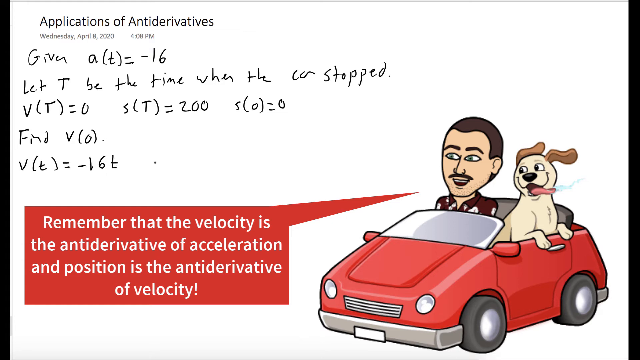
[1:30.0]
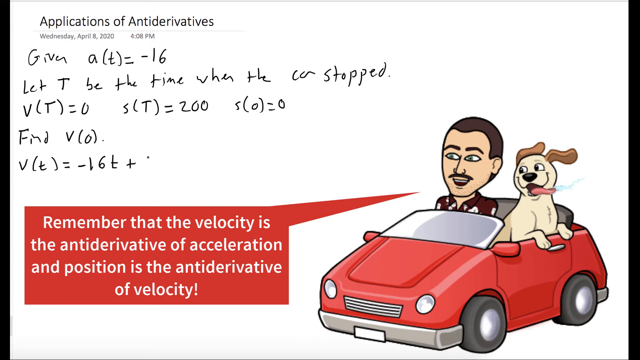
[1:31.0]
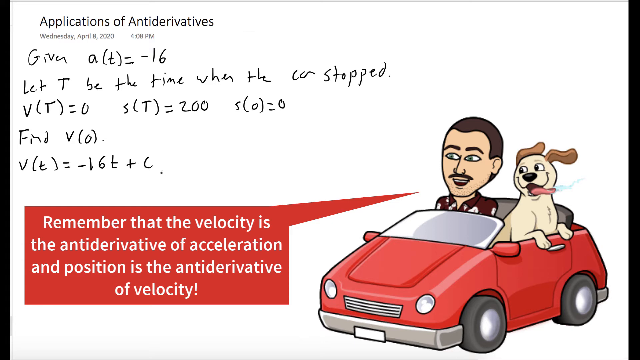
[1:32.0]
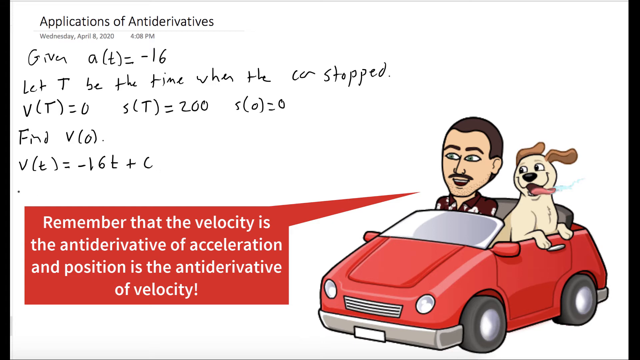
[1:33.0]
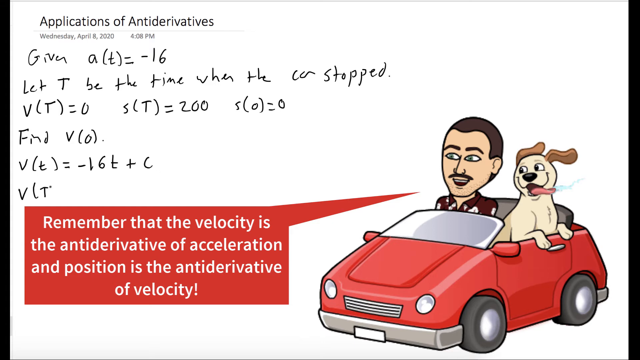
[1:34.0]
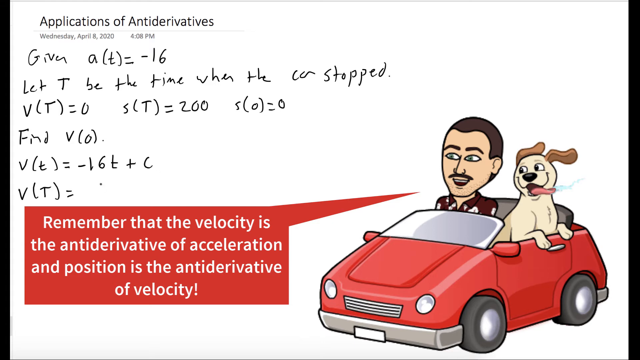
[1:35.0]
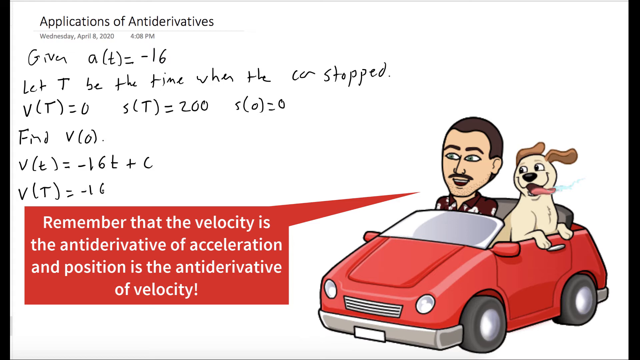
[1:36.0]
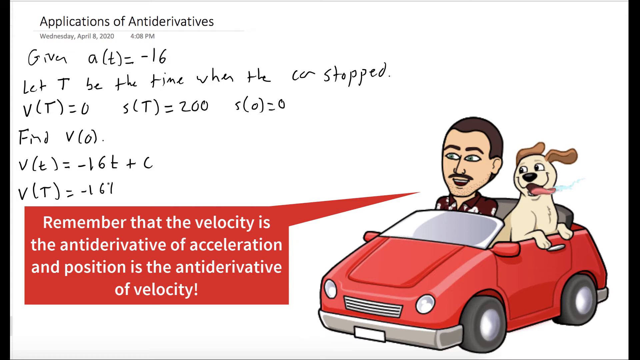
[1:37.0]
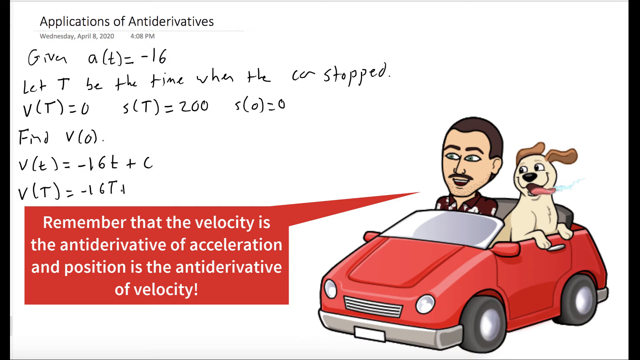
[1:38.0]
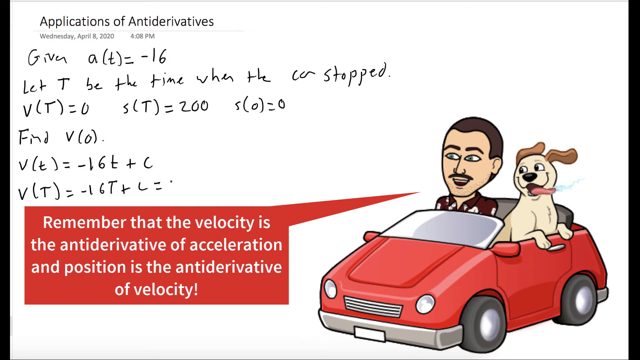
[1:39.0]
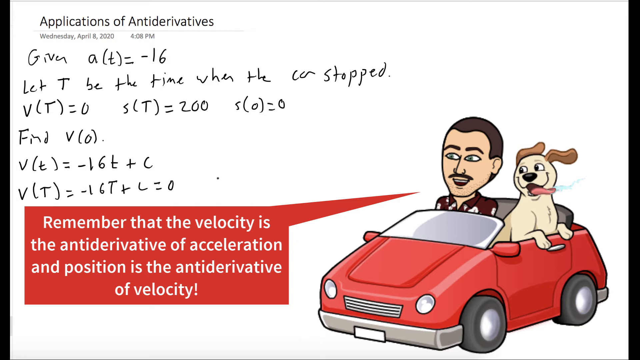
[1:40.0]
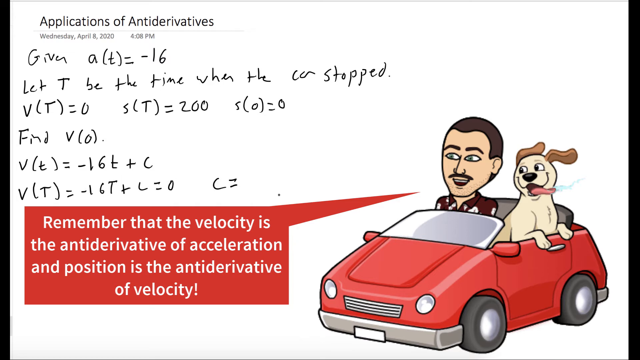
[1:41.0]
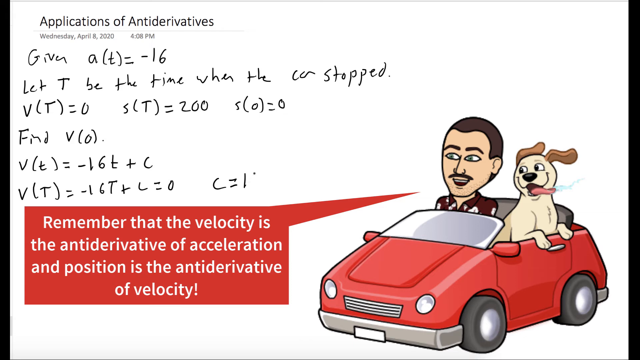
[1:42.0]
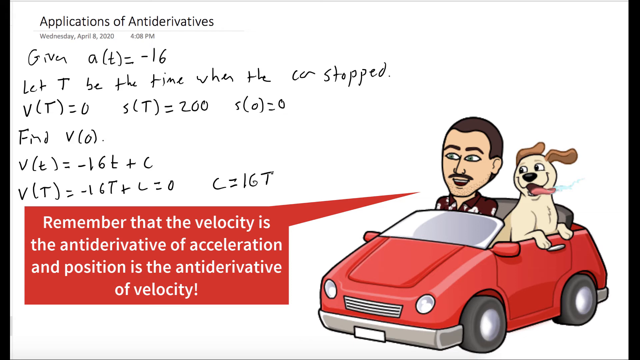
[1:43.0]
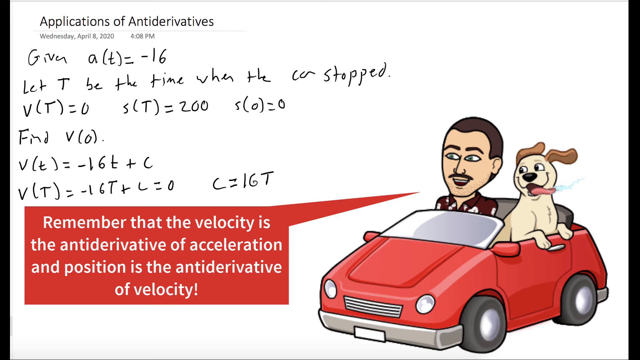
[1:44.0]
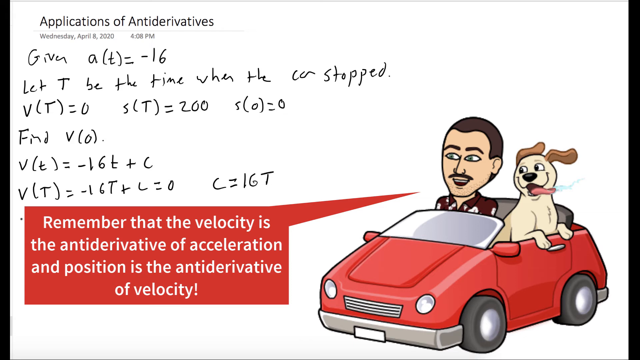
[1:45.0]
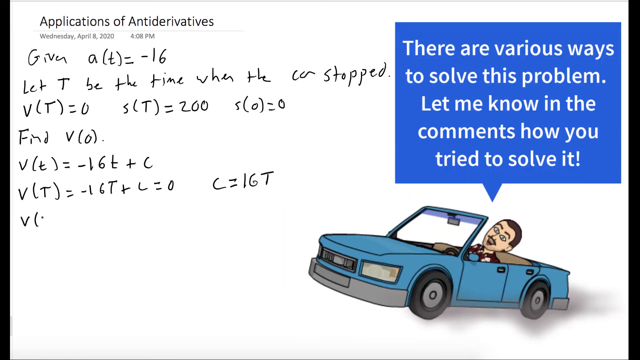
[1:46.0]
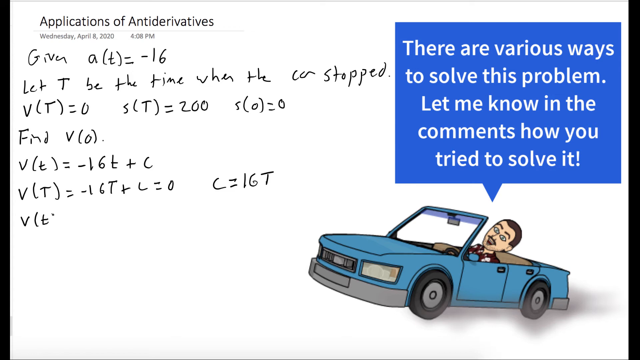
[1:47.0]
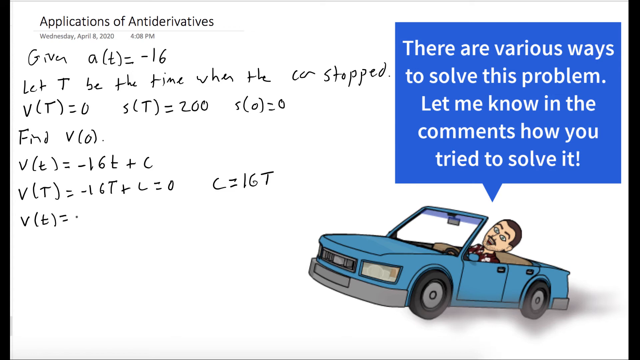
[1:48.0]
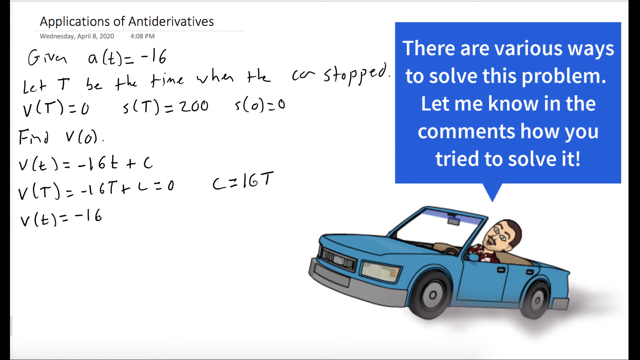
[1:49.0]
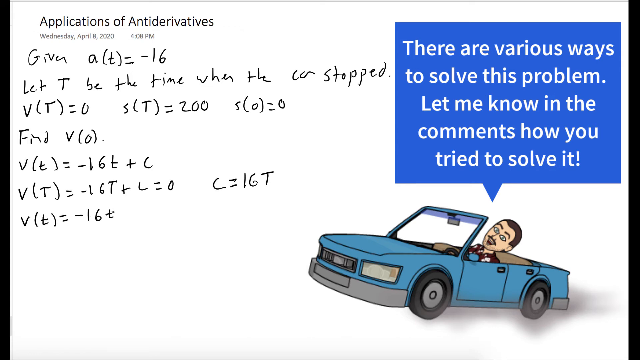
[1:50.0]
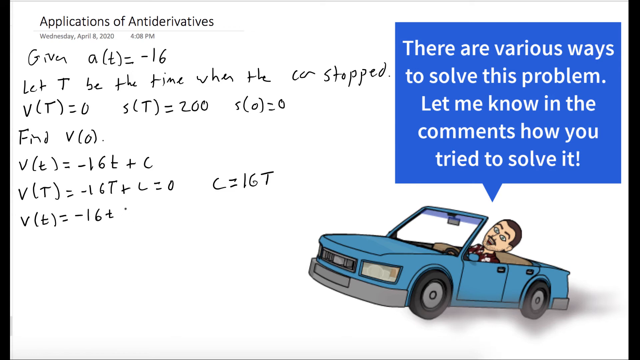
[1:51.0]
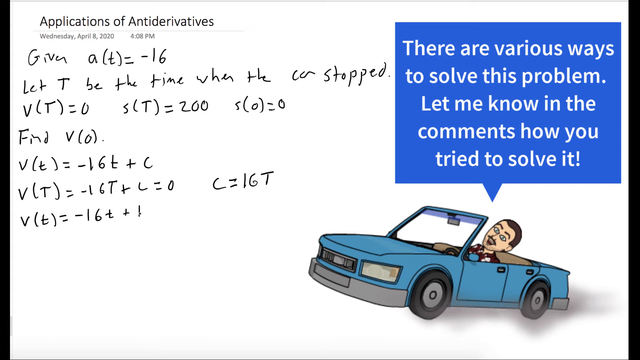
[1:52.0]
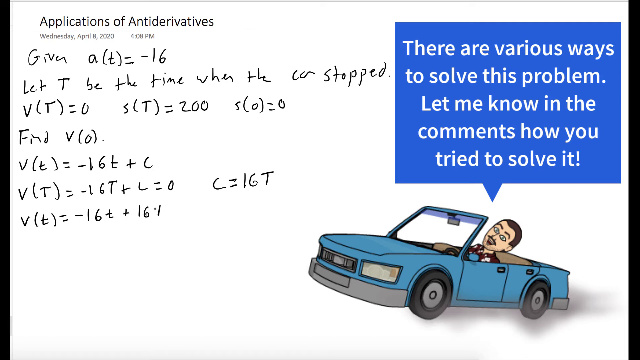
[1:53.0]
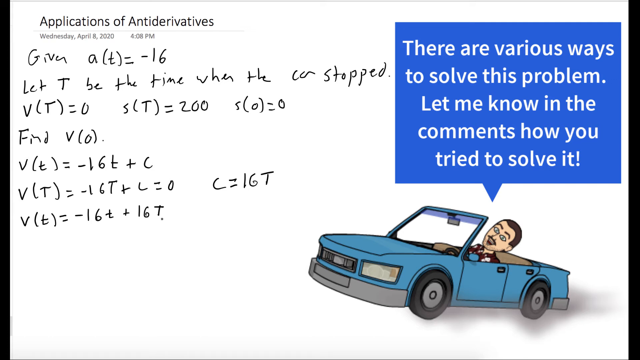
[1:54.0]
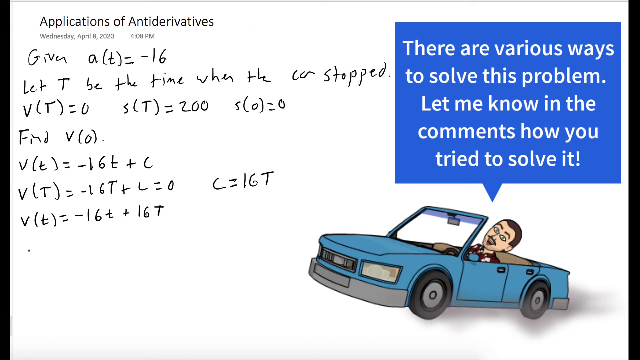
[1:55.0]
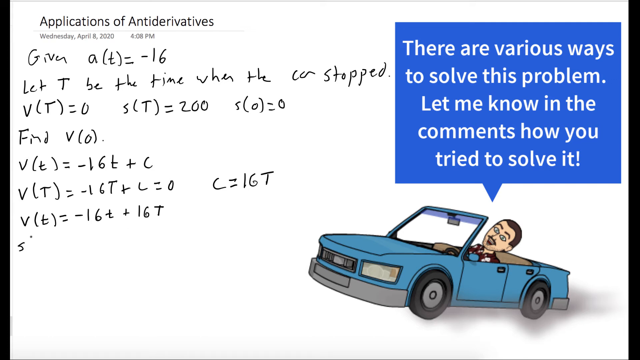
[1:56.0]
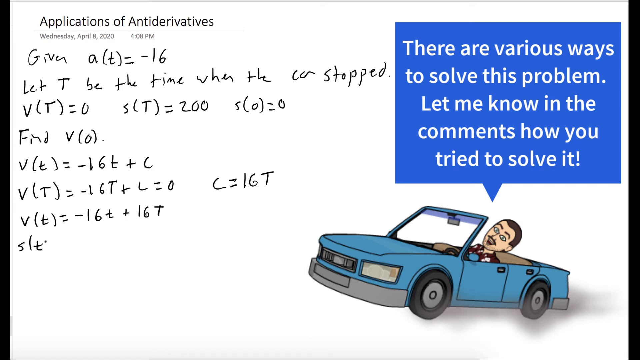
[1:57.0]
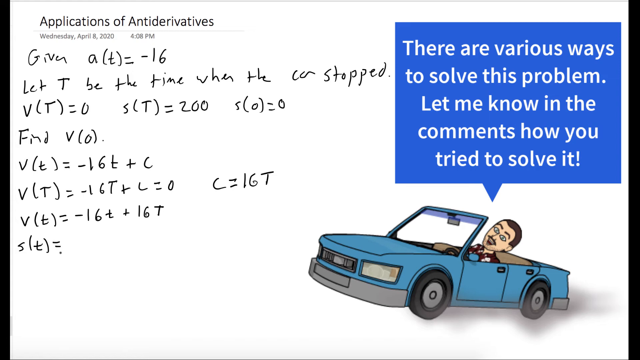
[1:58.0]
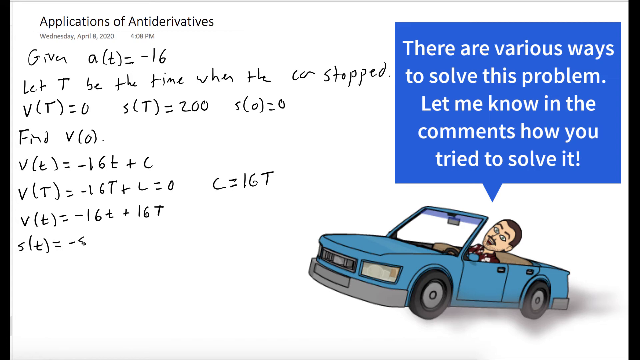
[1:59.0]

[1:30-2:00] The cursor continues to add to the mathematical problem in cursive handwriting in the top left corner. It says "V T equals 16 T plus C equals 0. C equals 16 T." The car then changes colour to blue, and its style changes slightly to a more boxy four-door vehicle, still a convertible. The dog is no longer in the car, but the man still is, and the speech bubble now appears above the car in blue. Its white text says "there are various ways to solve this problem. Let me know in the comments how you tried to solve it." Meanwhile the cursor keeps filling in cursive handwriting on the left of the screen: "V T equals minus 16 T plus 16 T. S T equals 8."